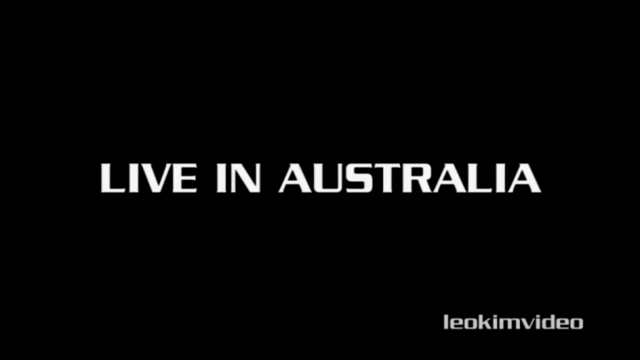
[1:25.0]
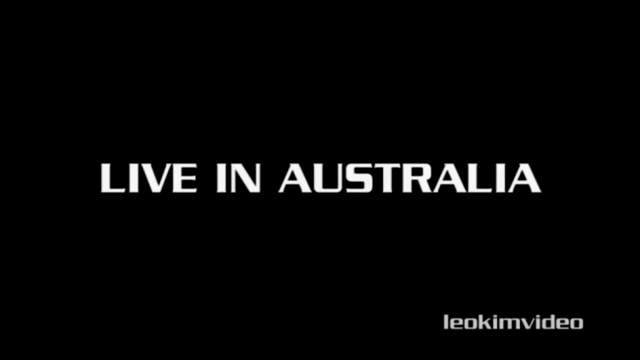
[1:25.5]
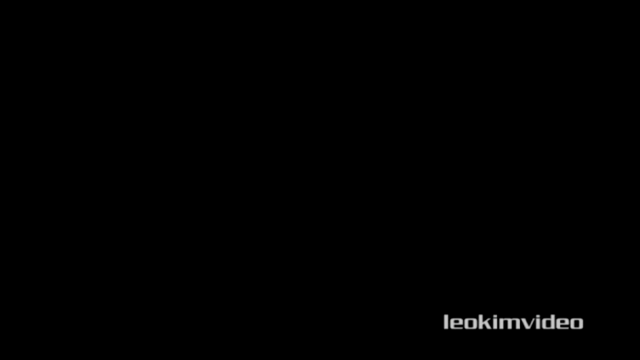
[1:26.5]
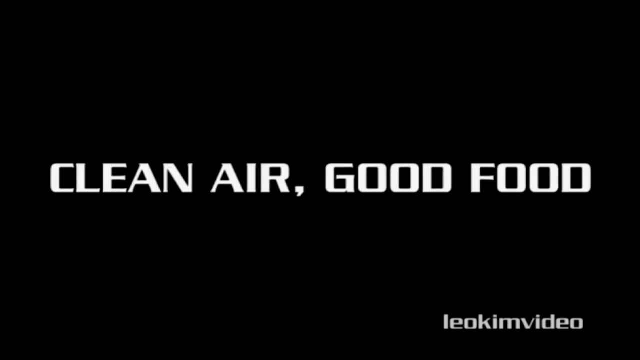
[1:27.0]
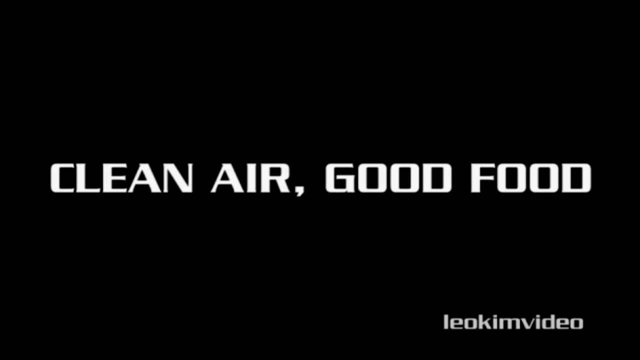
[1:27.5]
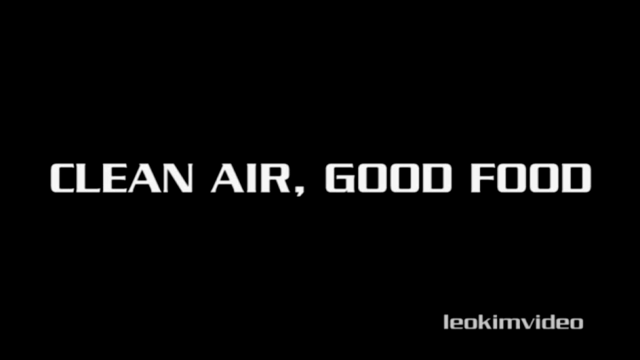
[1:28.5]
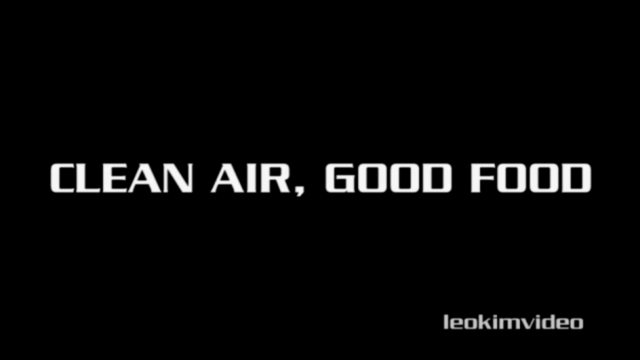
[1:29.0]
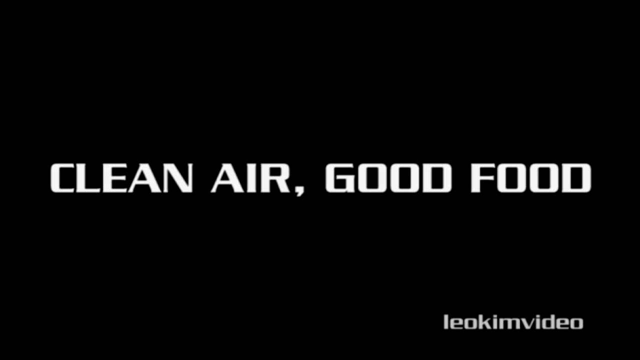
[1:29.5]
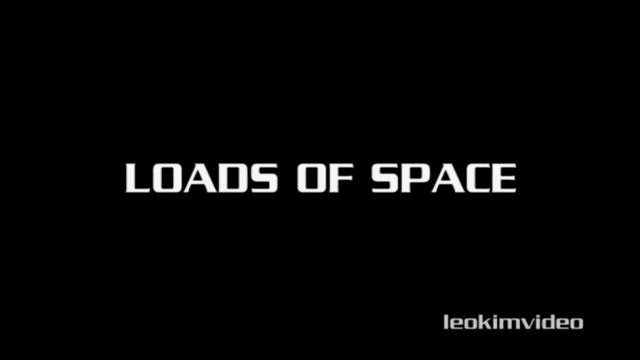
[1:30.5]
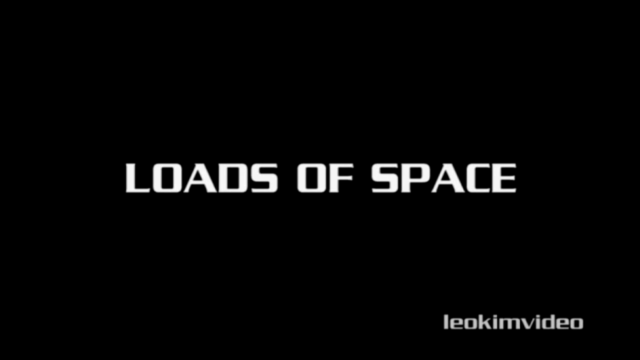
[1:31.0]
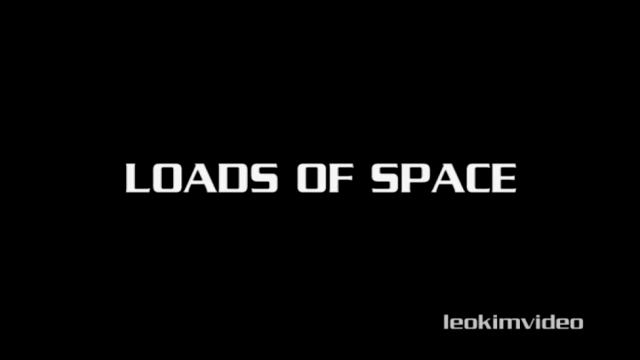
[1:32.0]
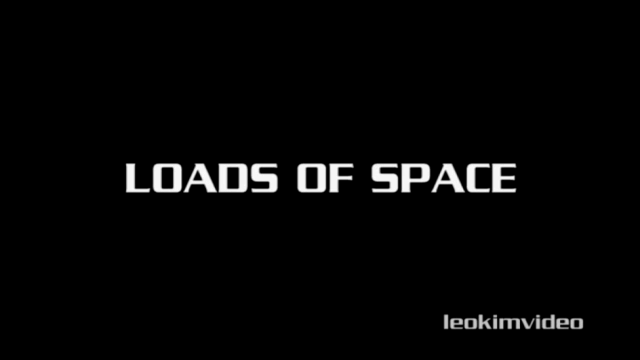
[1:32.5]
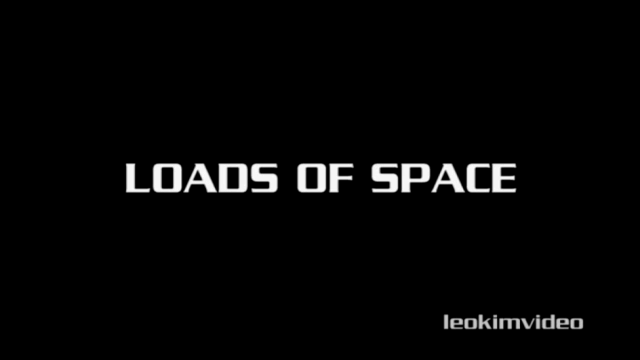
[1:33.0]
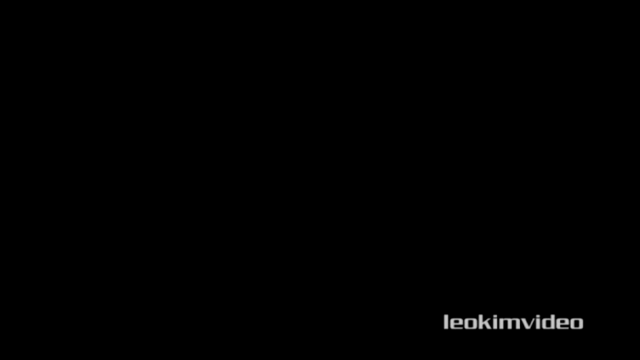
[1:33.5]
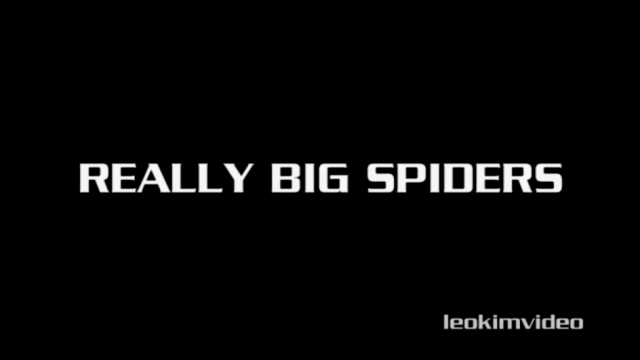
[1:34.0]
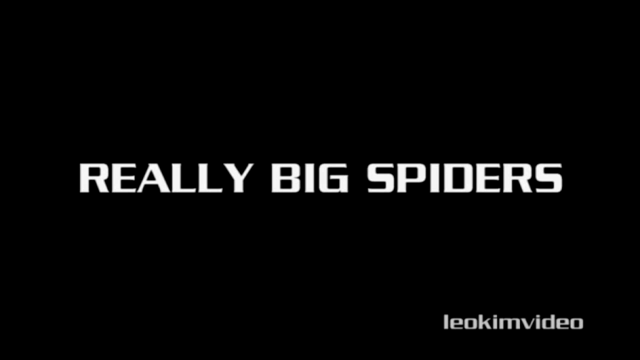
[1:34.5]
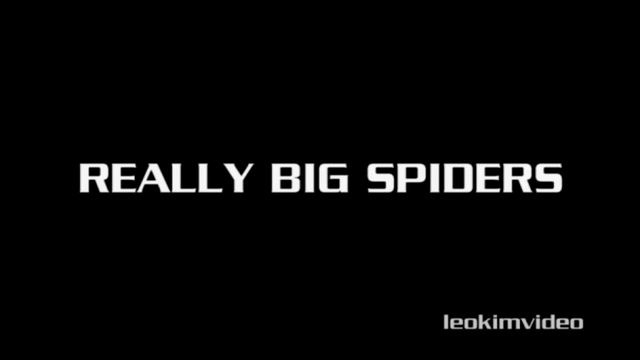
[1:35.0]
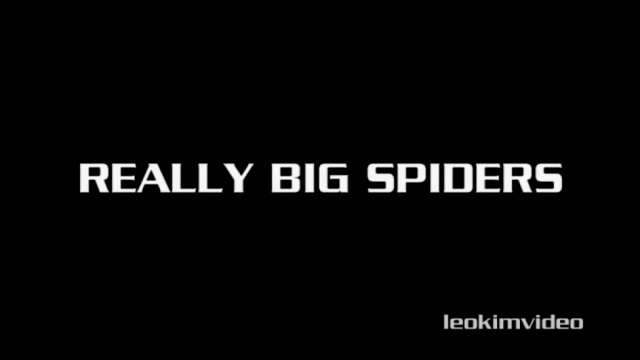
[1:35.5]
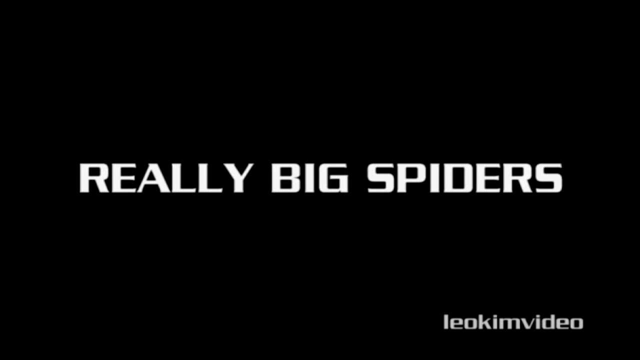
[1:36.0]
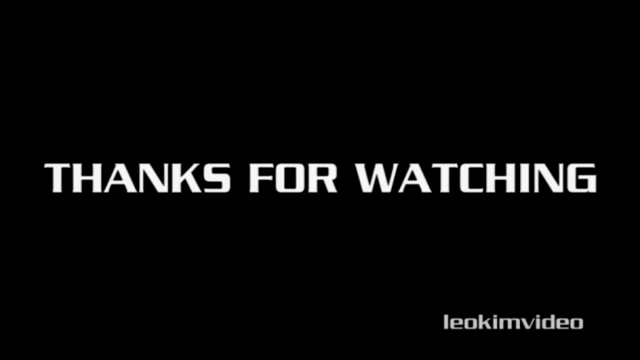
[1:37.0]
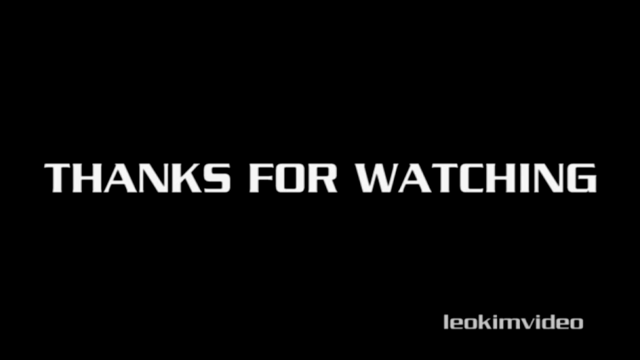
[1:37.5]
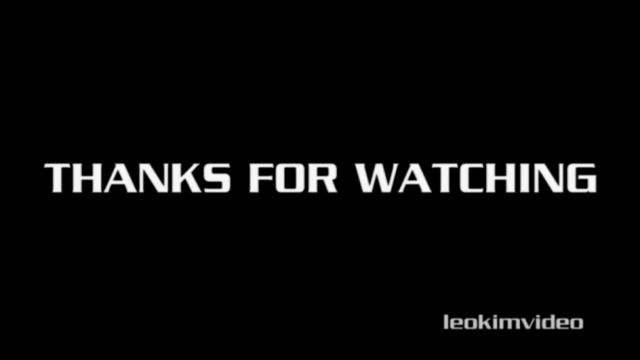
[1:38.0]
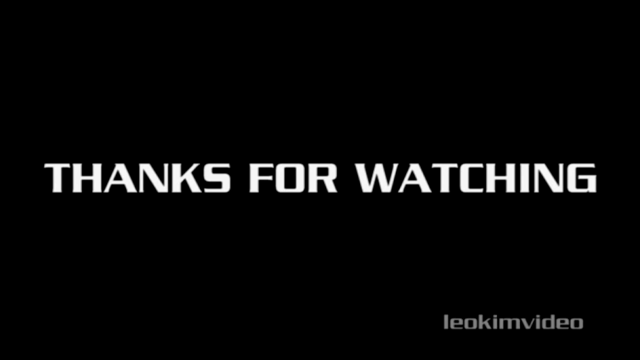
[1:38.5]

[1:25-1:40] A closing screen from Australia reads "clean air good food loads of space" and shows that it is a Leon Kim video of really big spiders, with the text "really big spiders." The background is black and the writing is white, in all capital letters that take up a good portion of the screen. In the bottom right-hand corner is a logo of a yellow face with really big black eyes that looks kind of spooky.